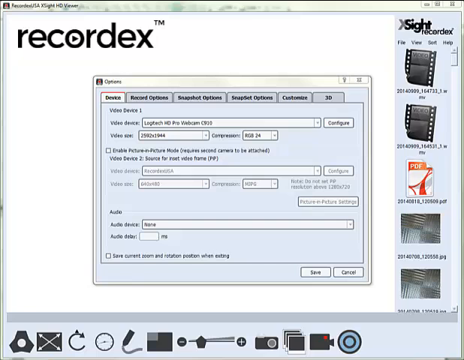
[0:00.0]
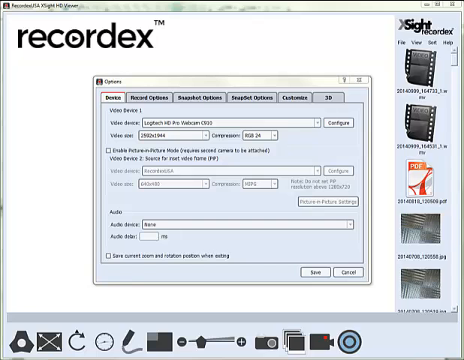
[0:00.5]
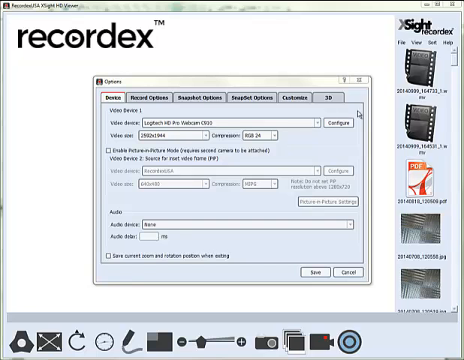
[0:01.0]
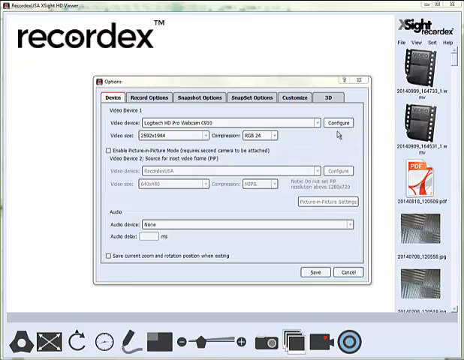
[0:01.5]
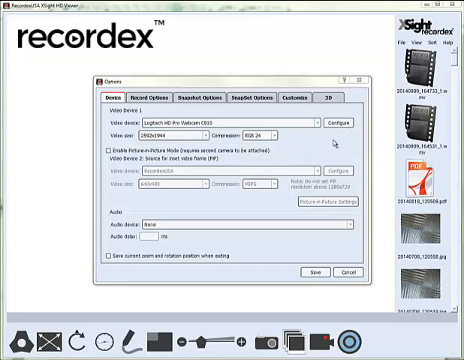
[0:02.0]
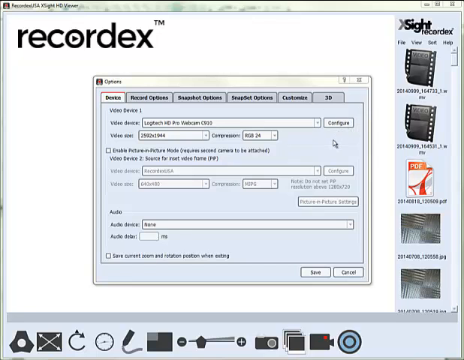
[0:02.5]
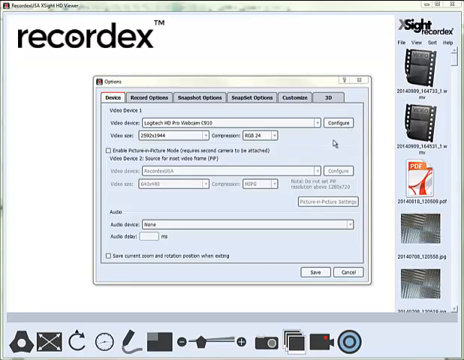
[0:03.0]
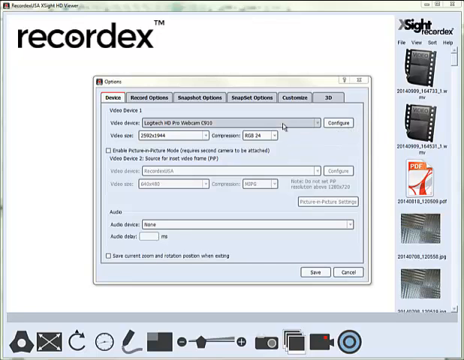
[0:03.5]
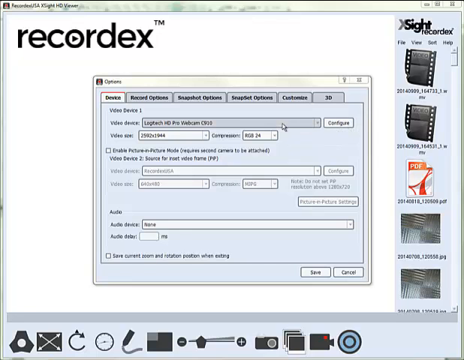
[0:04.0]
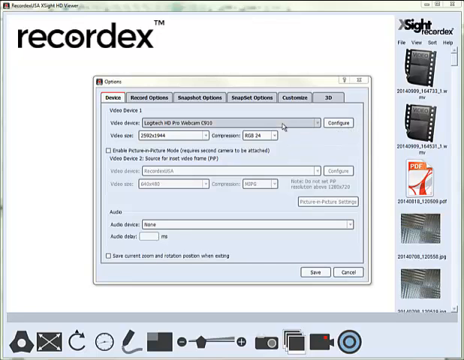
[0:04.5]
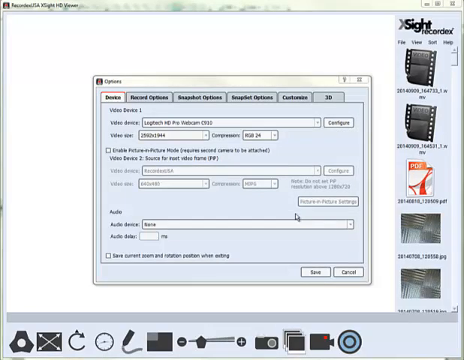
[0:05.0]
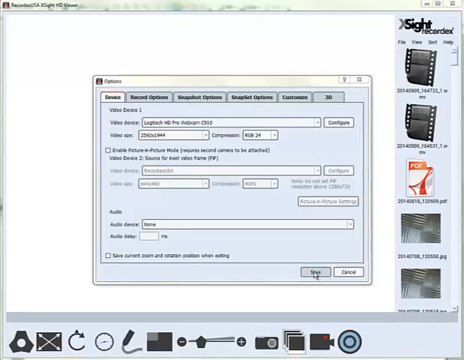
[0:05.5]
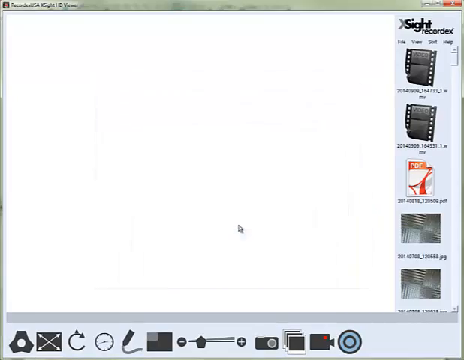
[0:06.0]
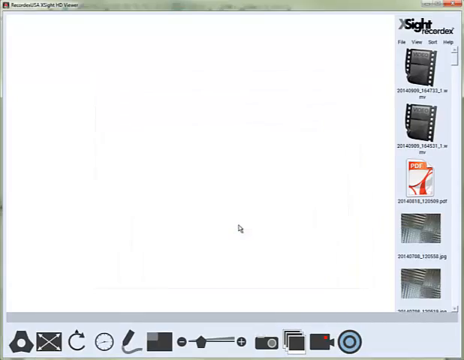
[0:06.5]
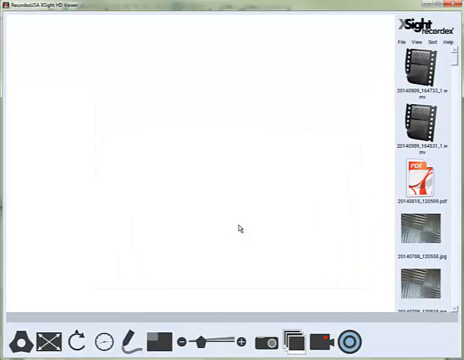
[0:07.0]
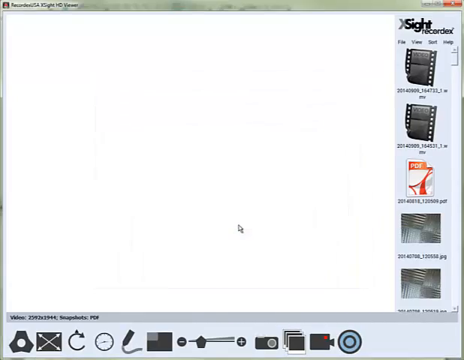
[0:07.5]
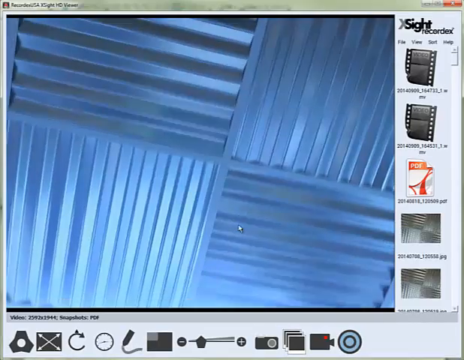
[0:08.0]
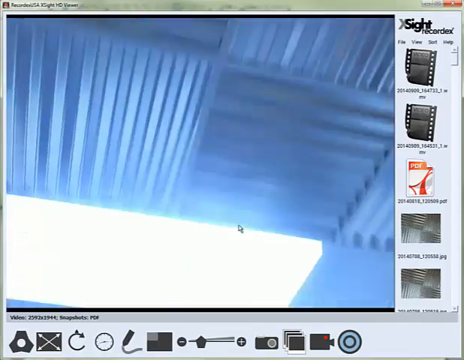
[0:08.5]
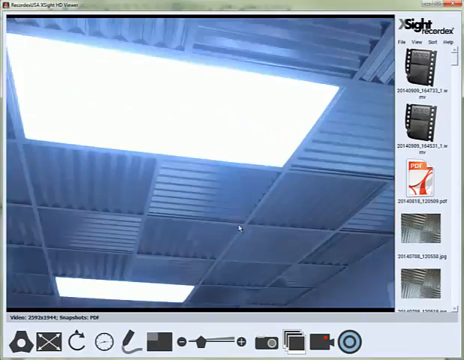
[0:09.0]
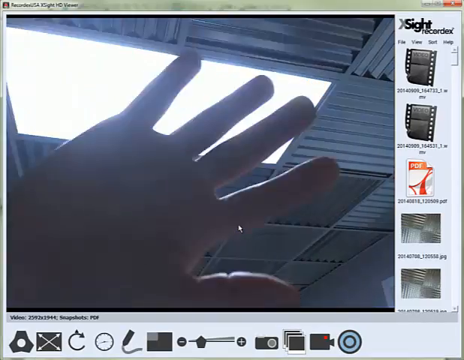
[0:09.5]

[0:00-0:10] A computer screen is pulled up, and in the upper left corner it says "Recordex." Another box that appears to be open says "Options." Multiple tabs are open in this box, and it looks like different information can be filled out in the boxes; there are also some buttons. Over on the right-hand side are some different sets of pictures, and up top it says "X Sight, Recordex." Someone uses a pointer to go through the different options on the screen, then clicks a button, and the box goes down. What appears to be a room is then shown, and it looks like someone is waving their hand.